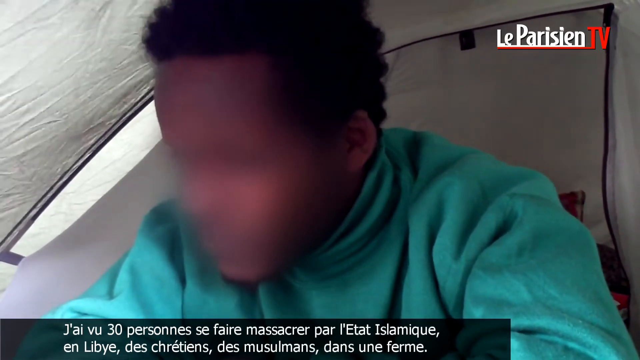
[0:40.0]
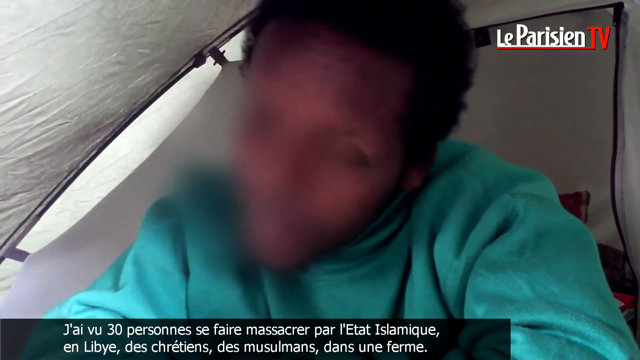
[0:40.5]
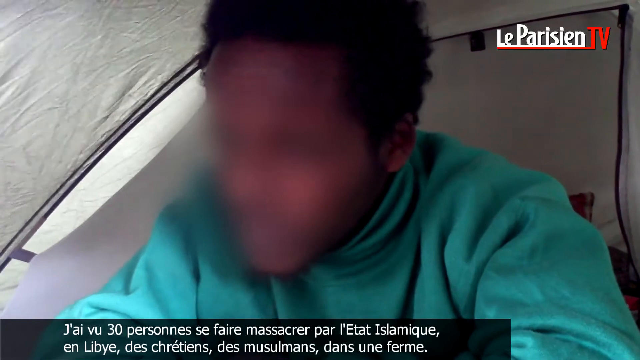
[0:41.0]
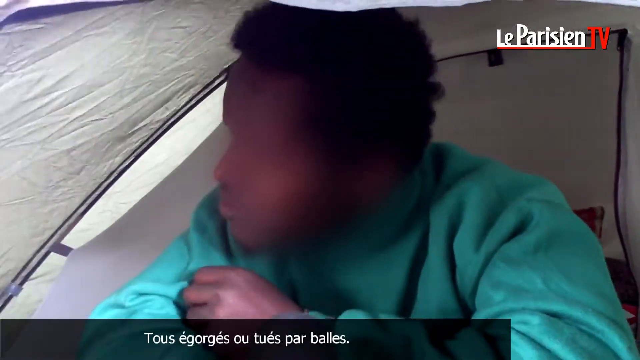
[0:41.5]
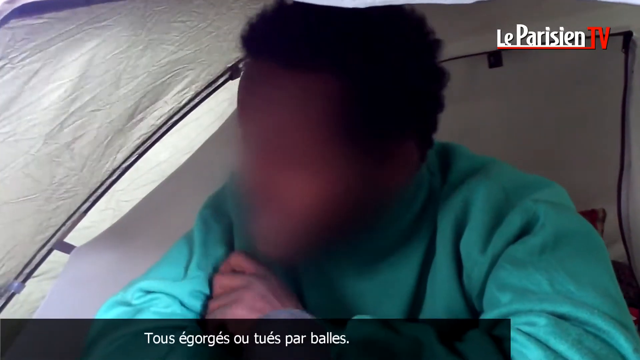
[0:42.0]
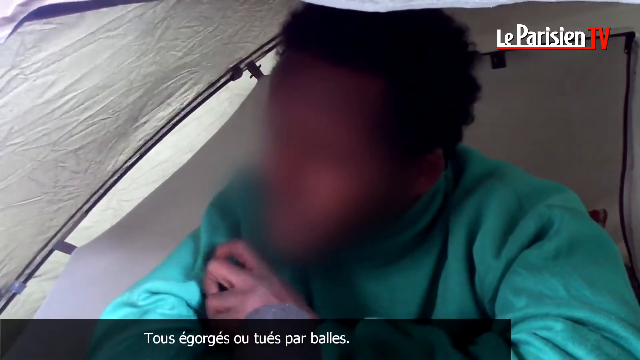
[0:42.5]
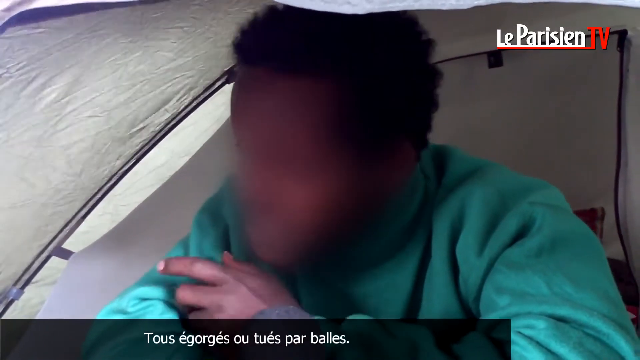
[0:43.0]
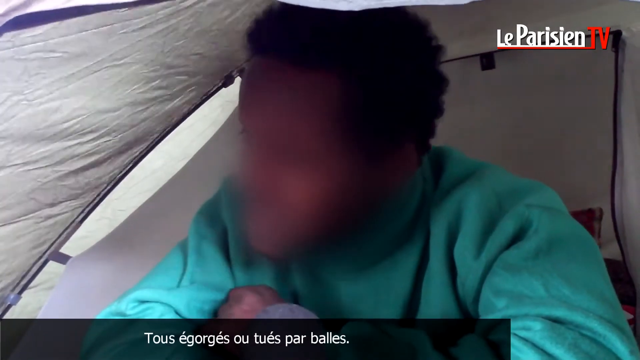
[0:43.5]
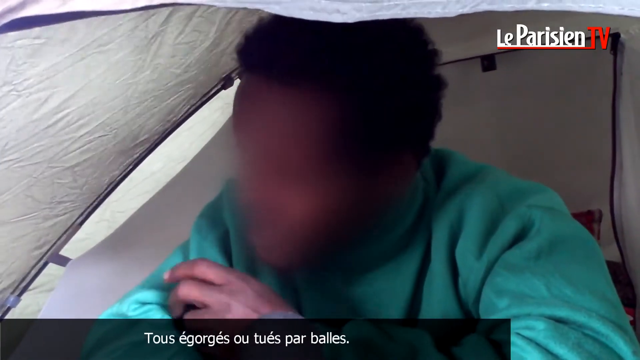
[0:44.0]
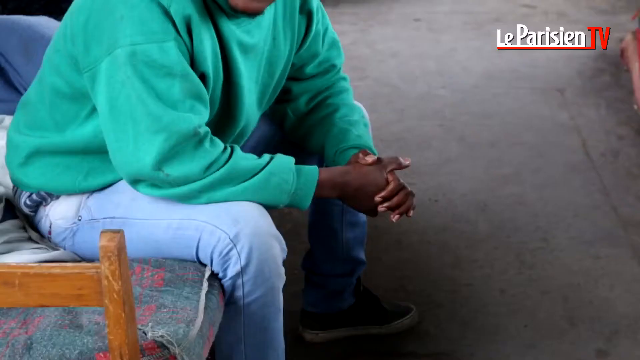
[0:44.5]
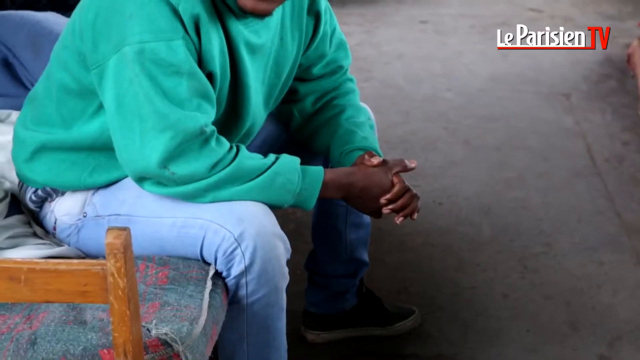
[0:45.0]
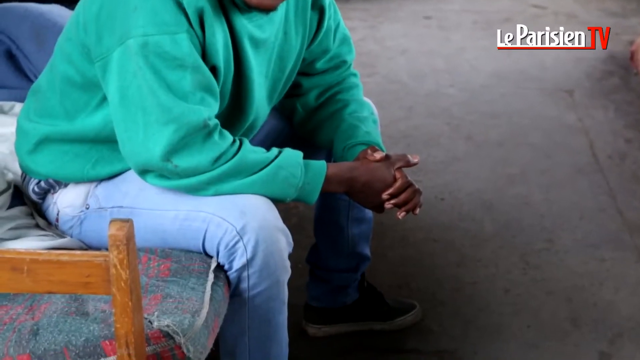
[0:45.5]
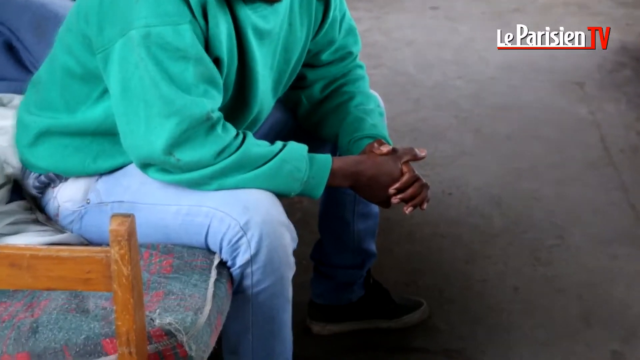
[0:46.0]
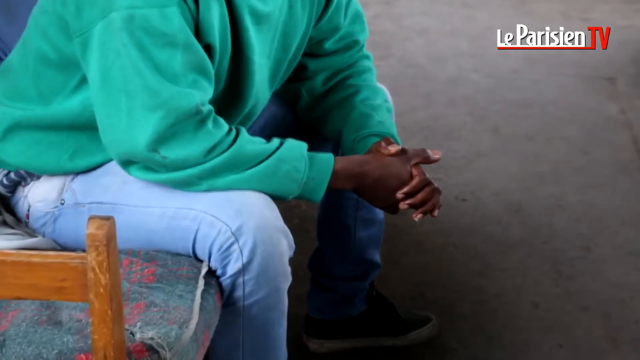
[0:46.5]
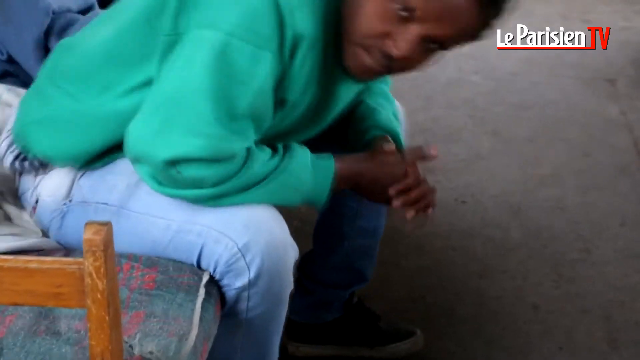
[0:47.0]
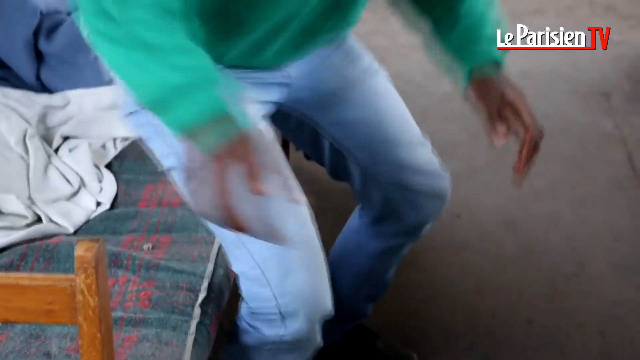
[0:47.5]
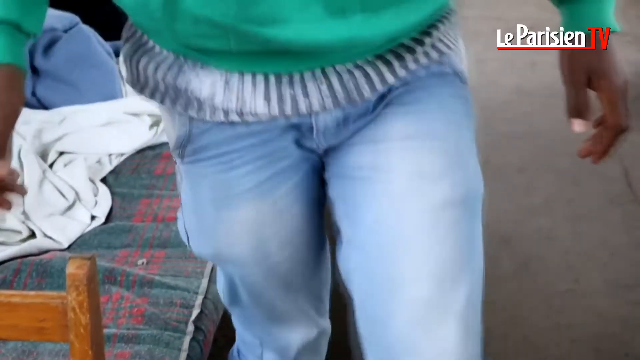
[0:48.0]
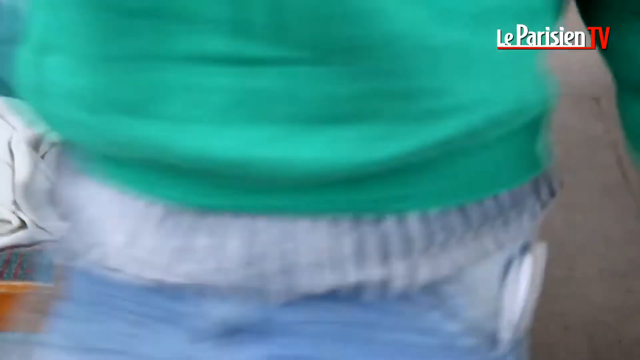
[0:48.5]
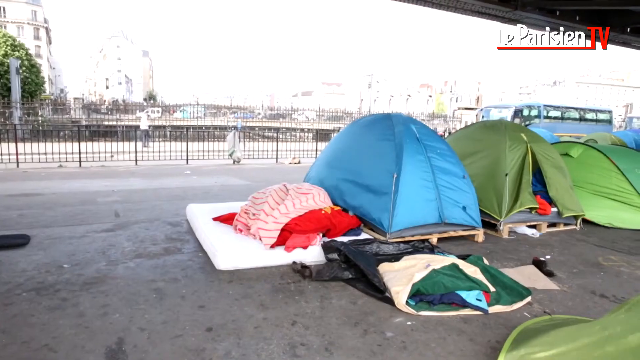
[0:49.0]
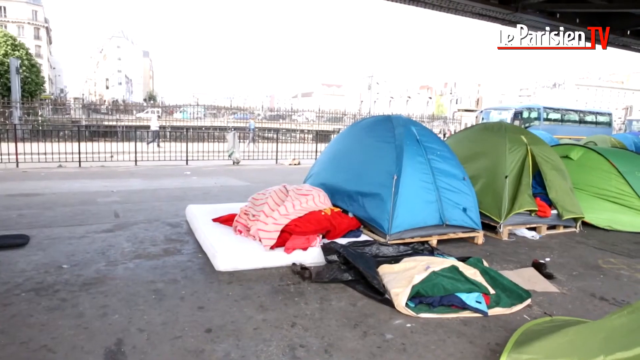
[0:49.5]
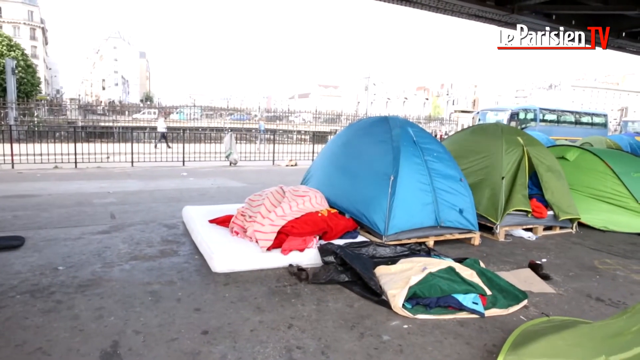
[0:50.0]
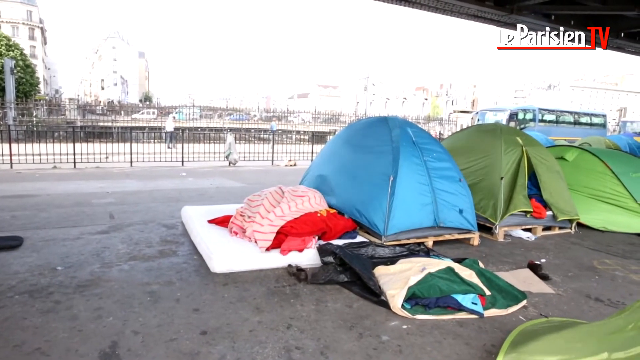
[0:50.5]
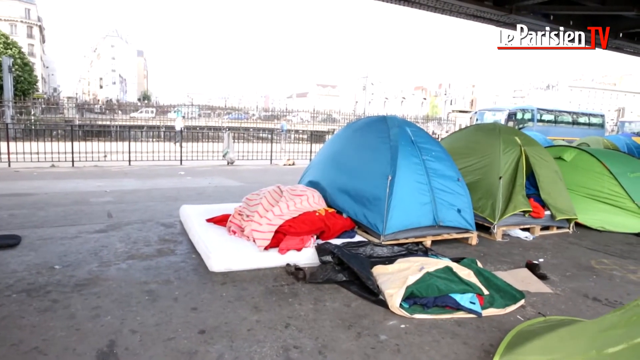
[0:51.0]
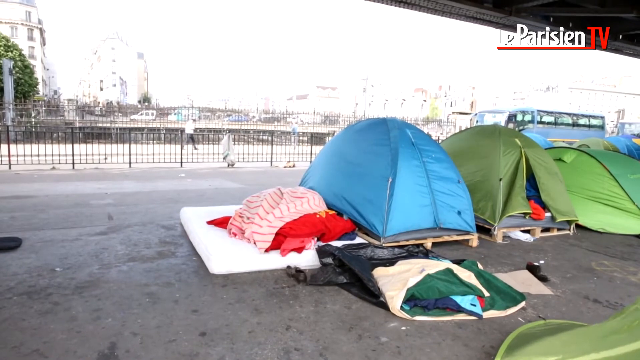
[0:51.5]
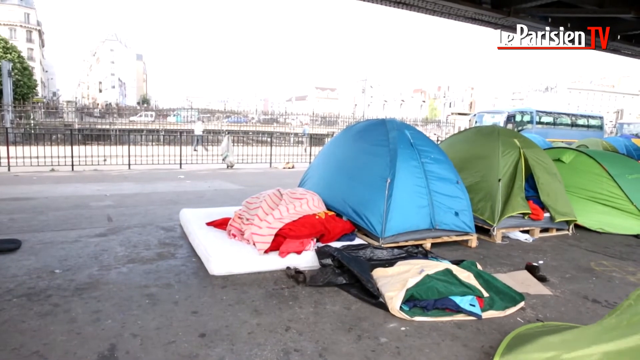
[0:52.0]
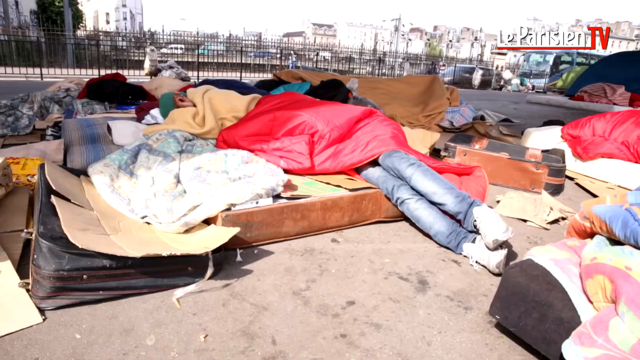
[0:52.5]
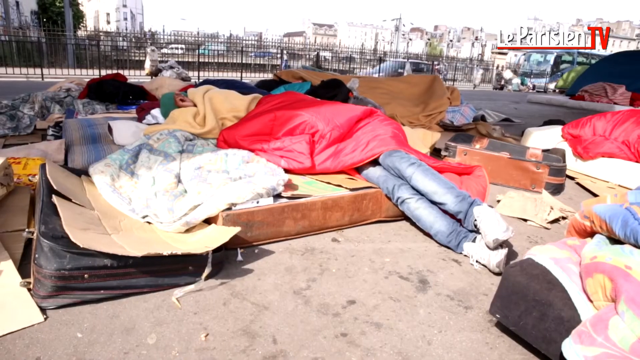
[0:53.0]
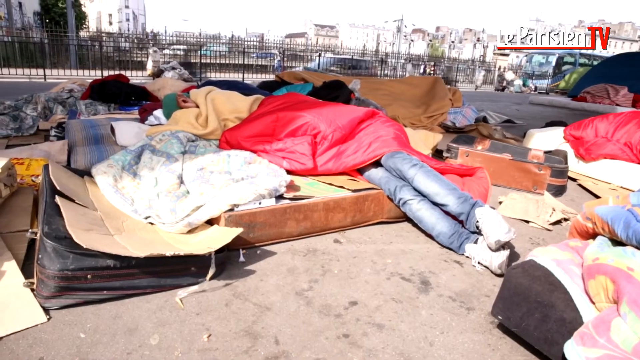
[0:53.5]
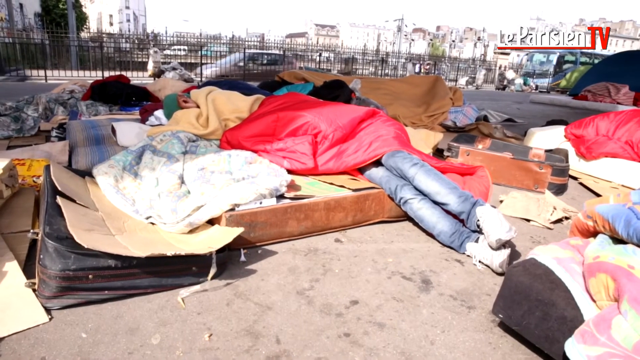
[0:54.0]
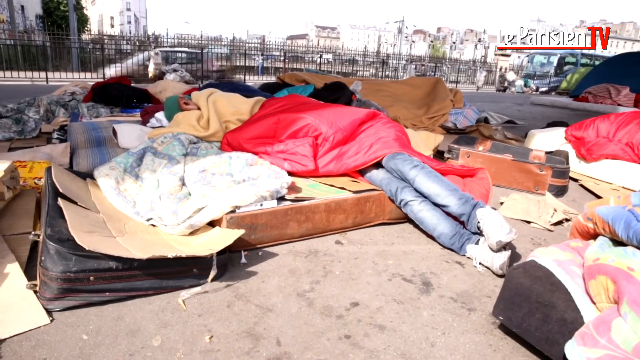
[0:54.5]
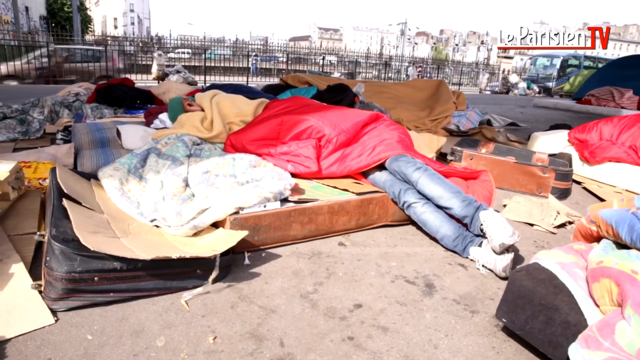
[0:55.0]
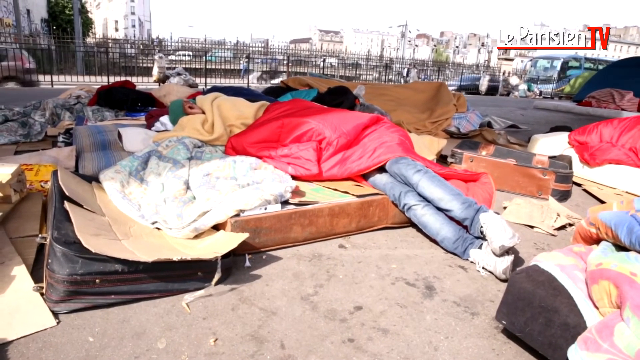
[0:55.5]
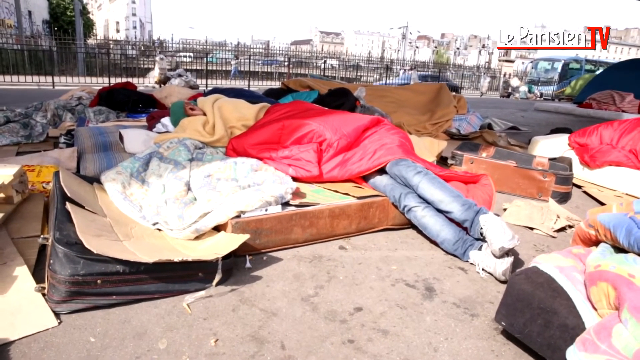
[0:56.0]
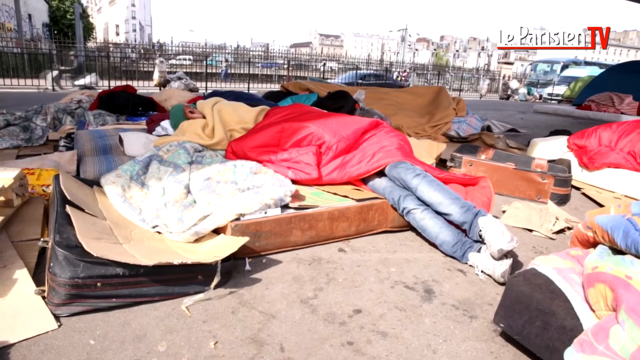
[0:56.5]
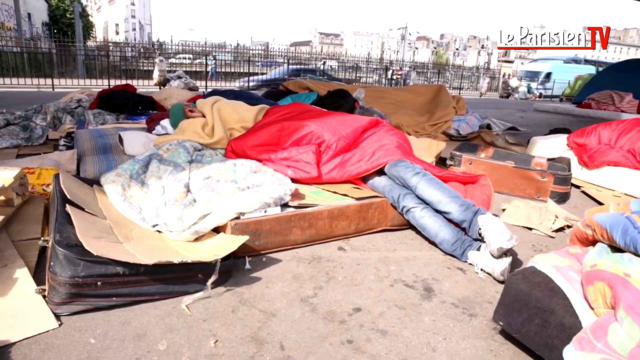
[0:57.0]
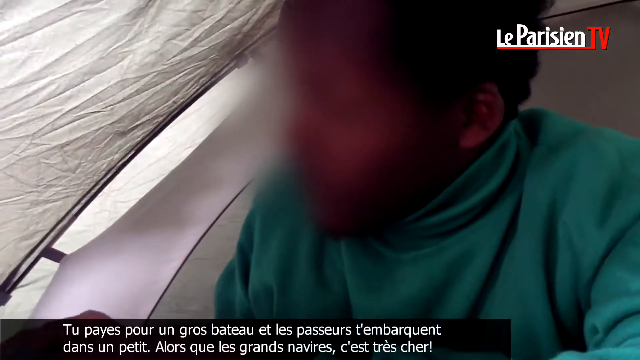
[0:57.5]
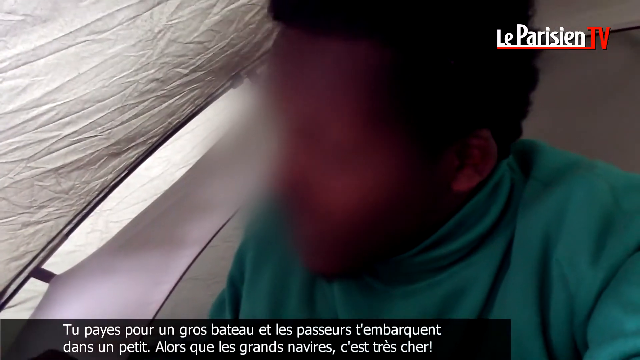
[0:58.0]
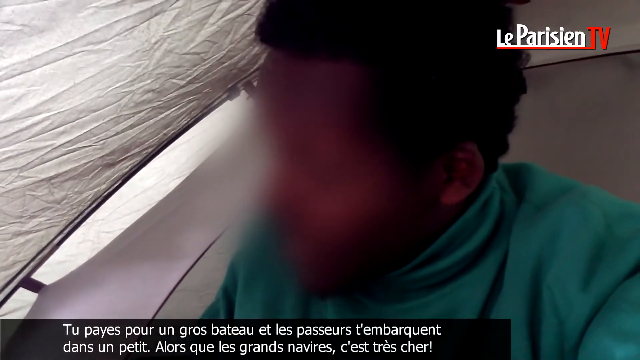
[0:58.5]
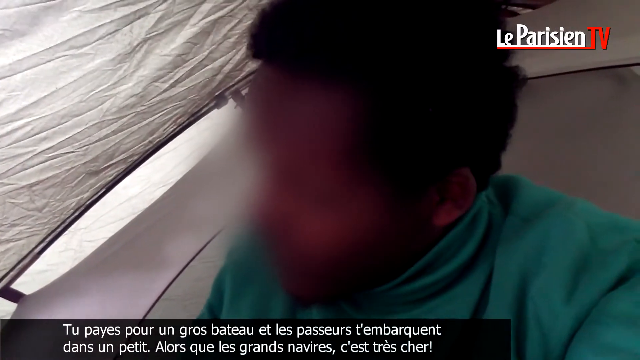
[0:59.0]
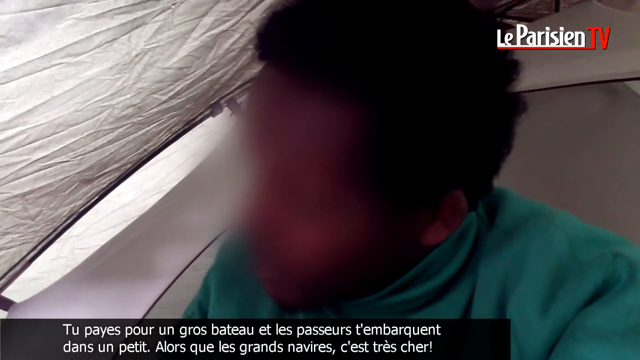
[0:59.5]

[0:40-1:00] As the man continues talking, he kind of jerks his head to the left toward his shoulder and then rocks it back and forth. His left hand twitches and fidgets across his right shoulder, and he keeps pointing at something or someone. The next scene shows him sitting on his bed again; there is a crease where he sits, with his body weight dipping that spot on the bed. A corner of the wooden bed frame shows at the very bottom left, and the floor is gray concrete. His hands are visible, with whitish-looking cuticles and fingernails contrasting in the scene. The camera zooms in closely on them, and as it zooms in he gets up and starts walking away. Another scene shows a blue tent next to a green tent next to another green tent. Behind them are railing-type walkway cages, not the kind used for animals, meant to keep people in or out of certain spots. In the background are buildings, buses, people walking about their day, and traffic, and people are sleeping in their tents on the streets.